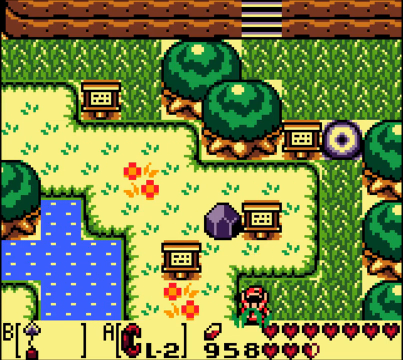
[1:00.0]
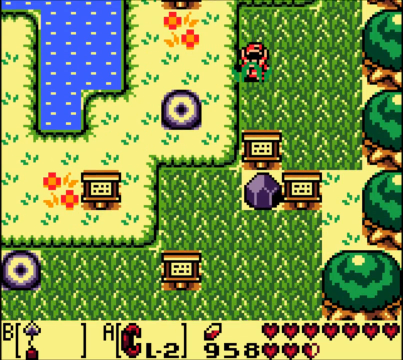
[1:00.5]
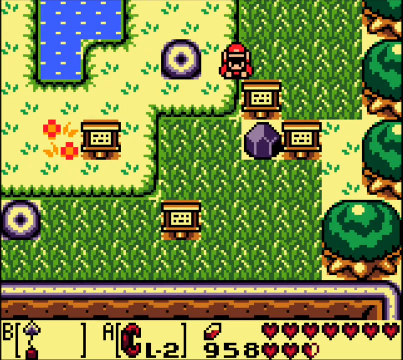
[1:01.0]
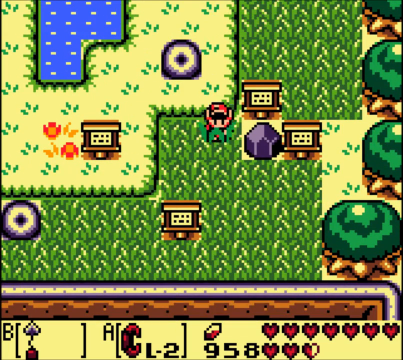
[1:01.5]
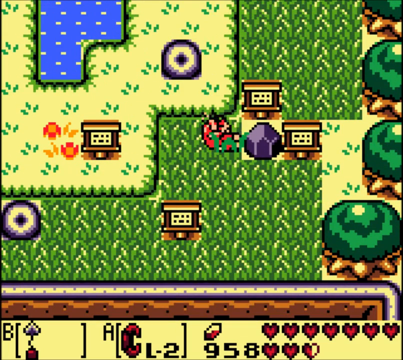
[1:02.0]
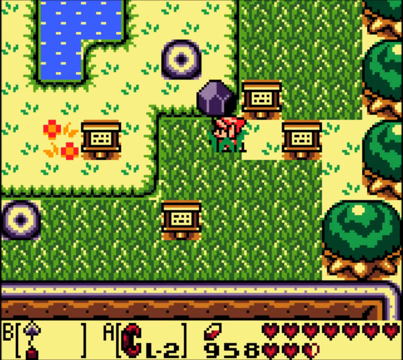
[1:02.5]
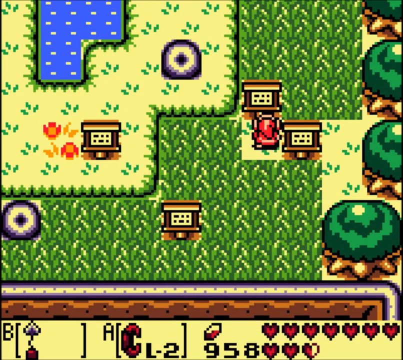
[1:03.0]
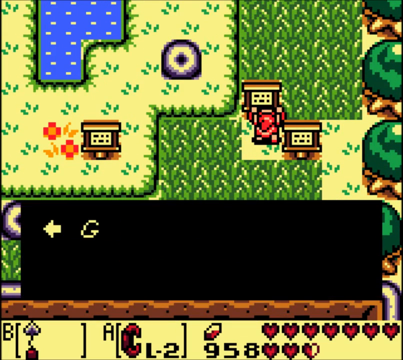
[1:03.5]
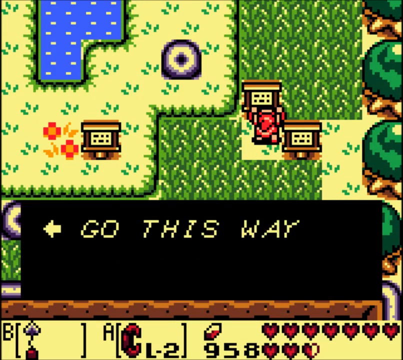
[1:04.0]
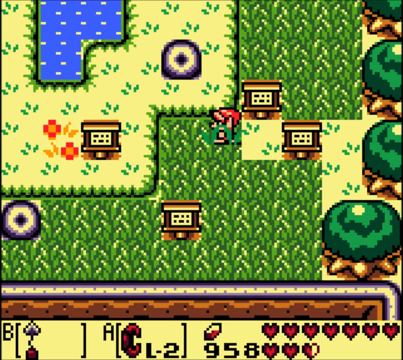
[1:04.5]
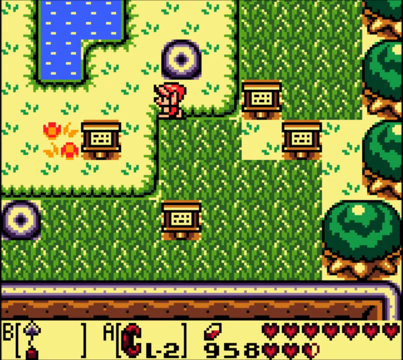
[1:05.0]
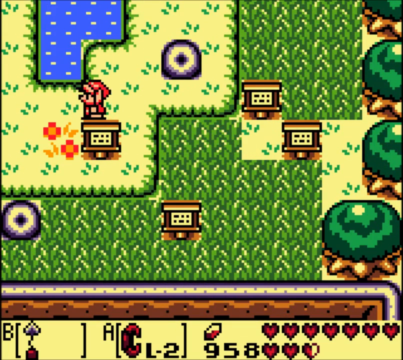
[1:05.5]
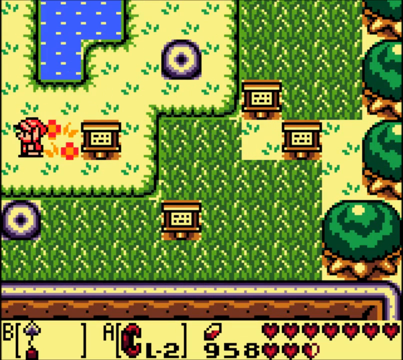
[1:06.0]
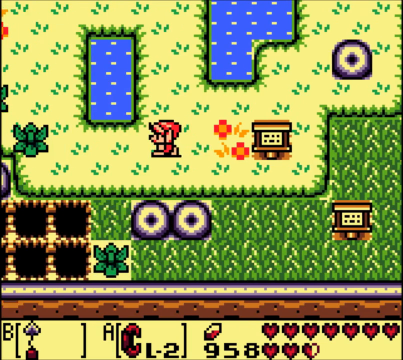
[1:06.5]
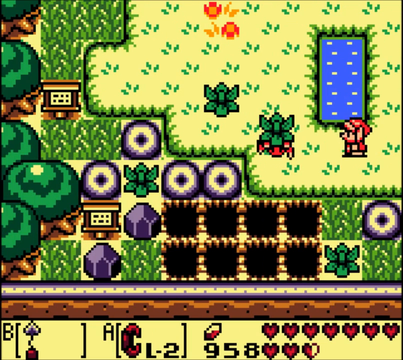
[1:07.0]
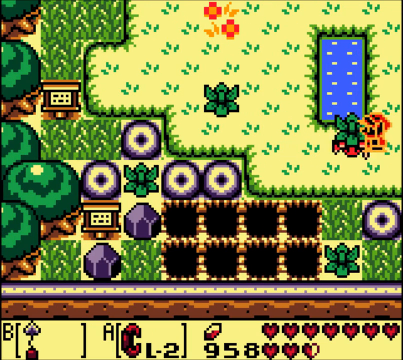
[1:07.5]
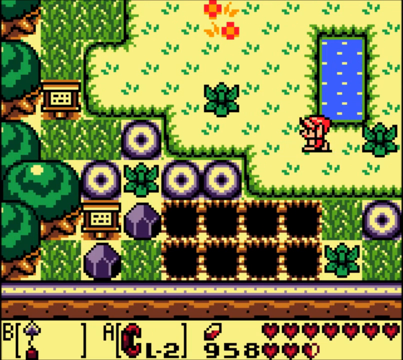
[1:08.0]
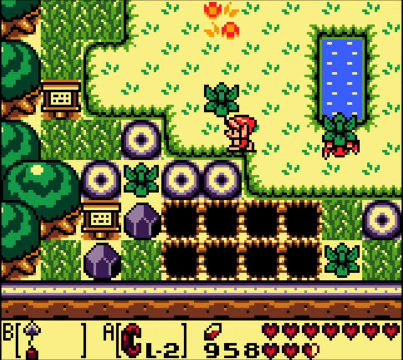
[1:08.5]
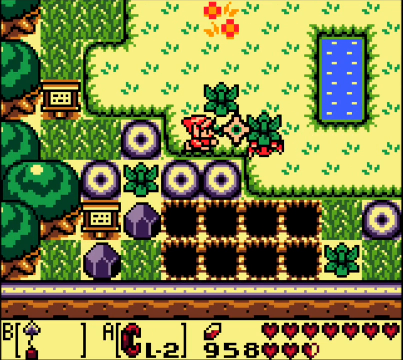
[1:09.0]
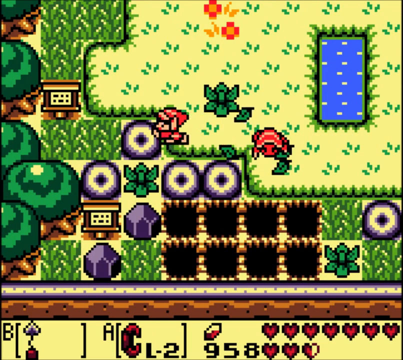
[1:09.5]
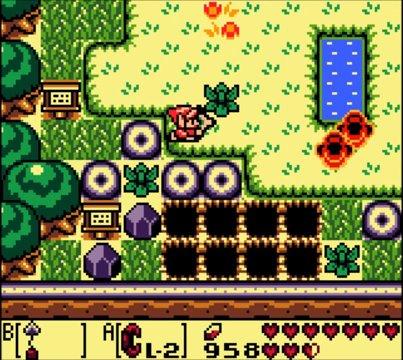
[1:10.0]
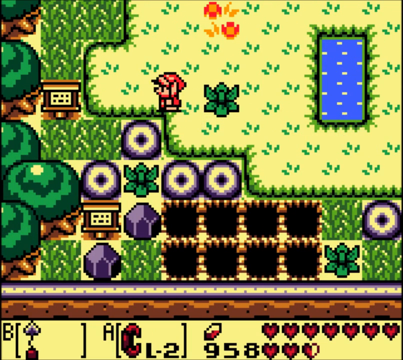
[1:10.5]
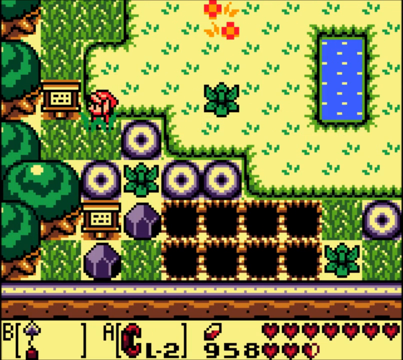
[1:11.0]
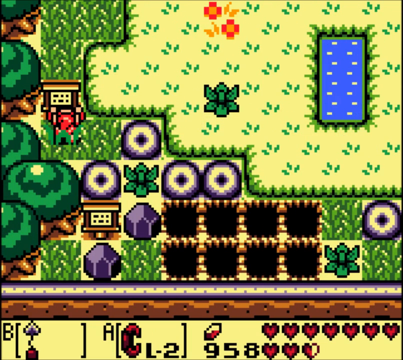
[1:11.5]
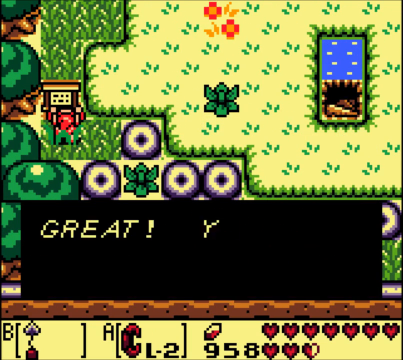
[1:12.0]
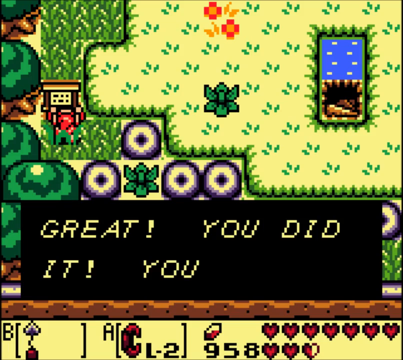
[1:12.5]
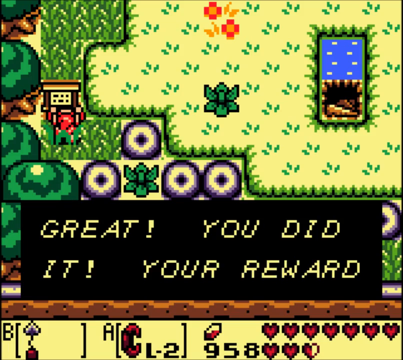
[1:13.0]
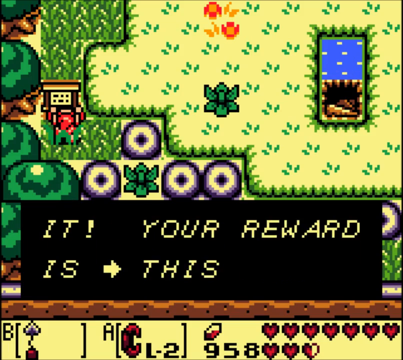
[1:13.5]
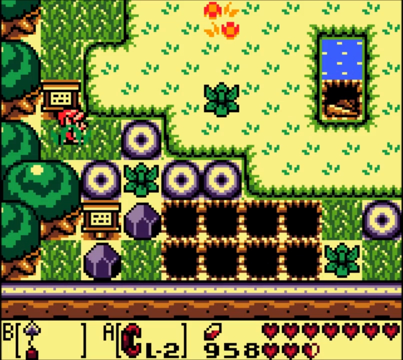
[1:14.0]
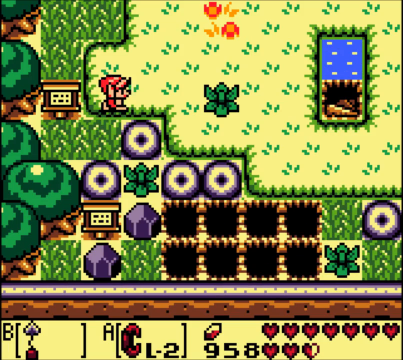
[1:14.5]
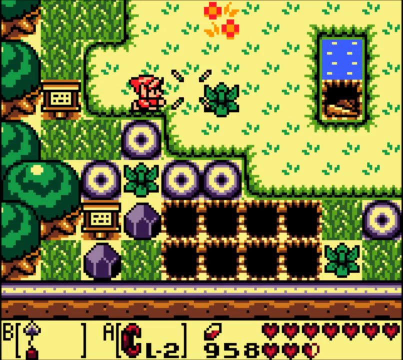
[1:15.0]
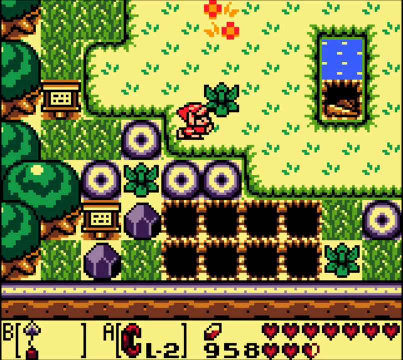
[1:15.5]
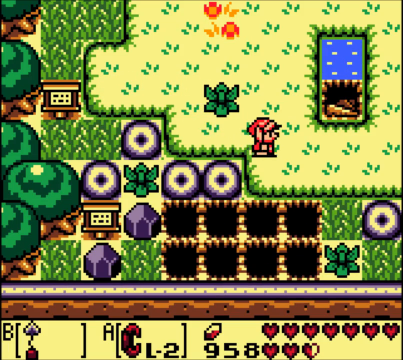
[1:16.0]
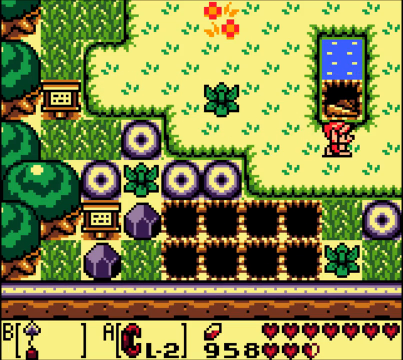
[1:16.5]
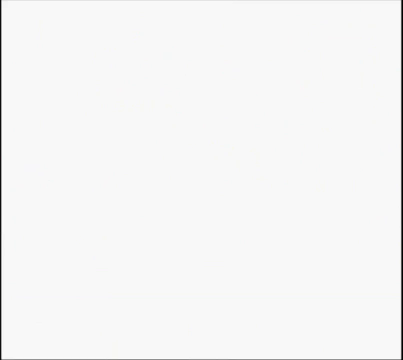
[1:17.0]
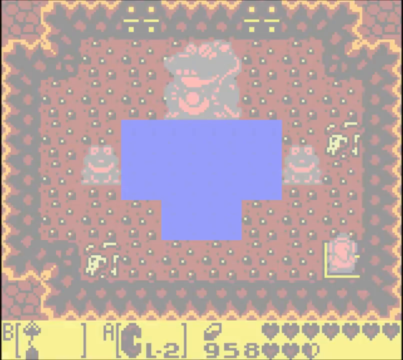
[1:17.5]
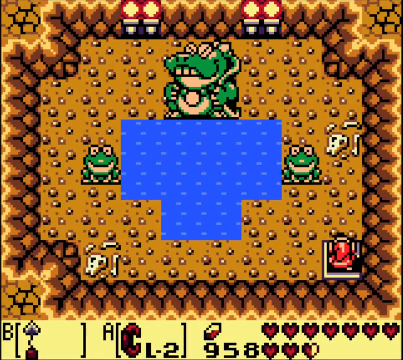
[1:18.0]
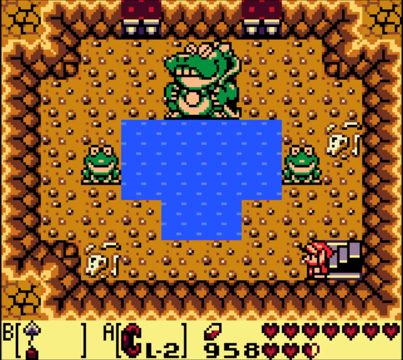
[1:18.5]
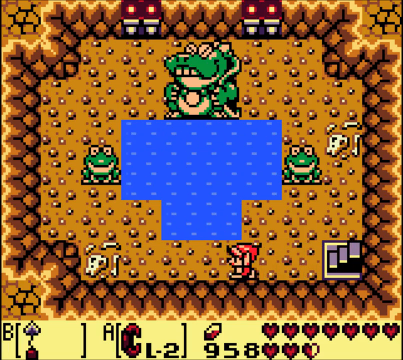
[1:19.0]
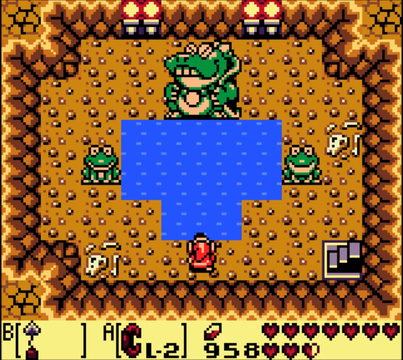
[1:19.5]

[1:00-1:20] The red pixelated character continues following the signs, moving down the screen as it scrolls into a new area. He lifts and smashes a purple item, possibly a rock, that blocks the way to the next sign, and that sign directs him to go left this time. He moves through the grass and the desert area, where one of the plants, which looks like a green shrub, comes to life with red legs and runs into the character; the screen flashes momentarily, indicating damage. The character runs away to the left with the plant following him. He turns and fires, and the leaves come off the creature, revealing a red four-legged beast facing the camera with two eyes. A diamond-shaped pink weapon with a green centre is thrown, hits the animal, and destroys it. Another sign says "great, you did it, your reward" with an arrow pointing right. The character then enters a different area of the map.